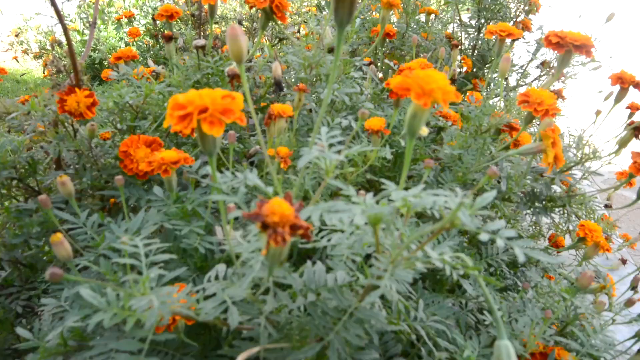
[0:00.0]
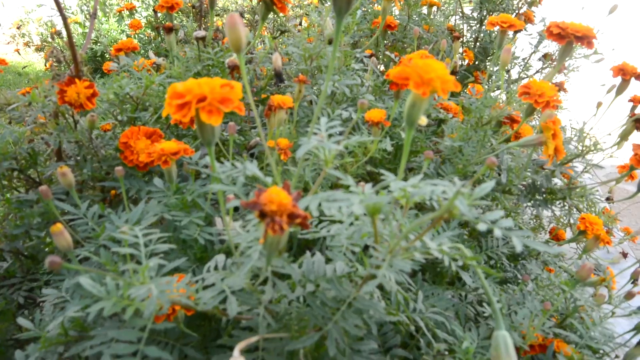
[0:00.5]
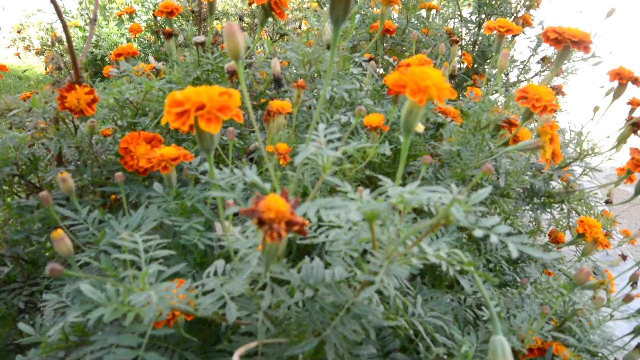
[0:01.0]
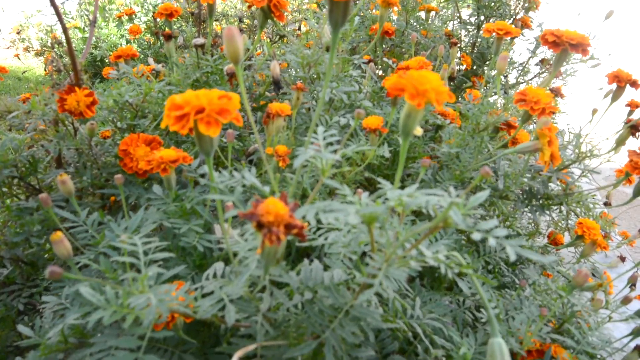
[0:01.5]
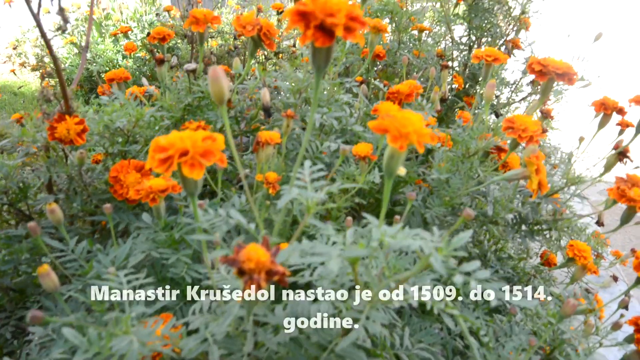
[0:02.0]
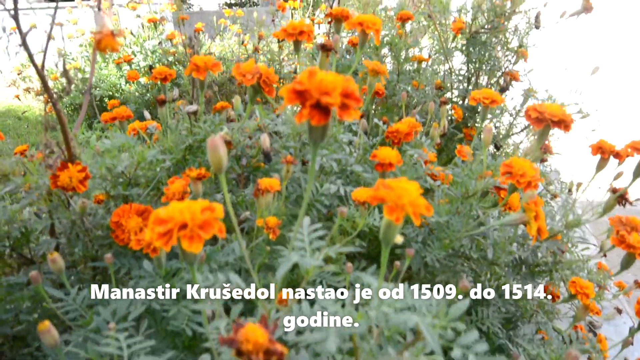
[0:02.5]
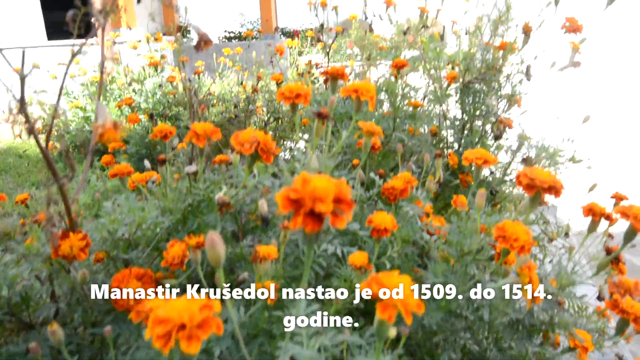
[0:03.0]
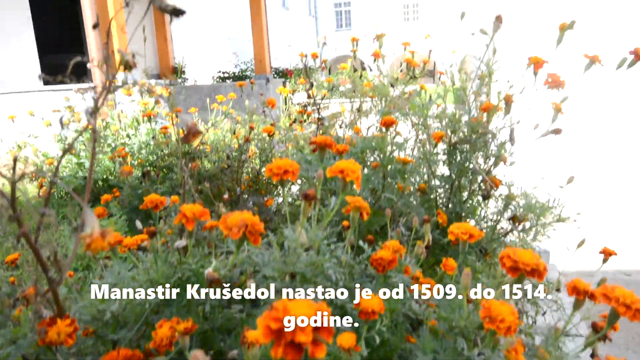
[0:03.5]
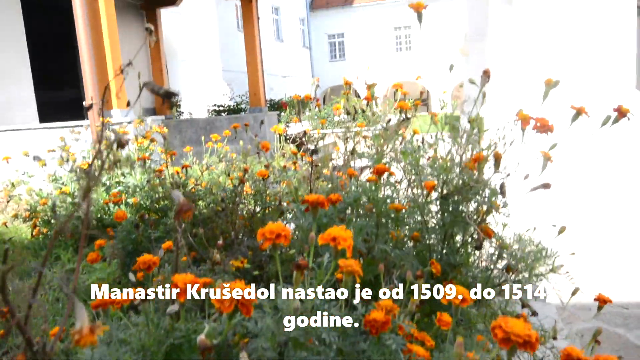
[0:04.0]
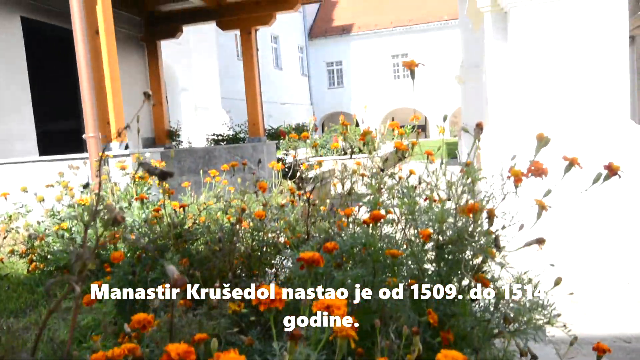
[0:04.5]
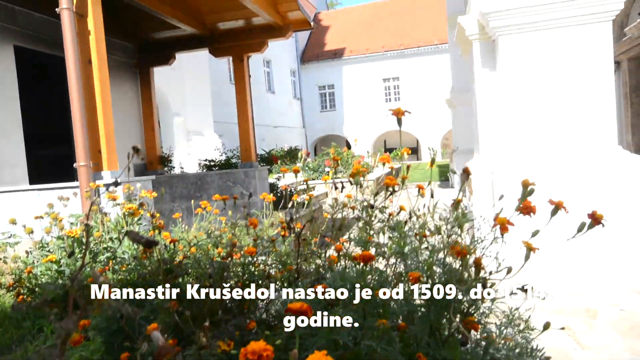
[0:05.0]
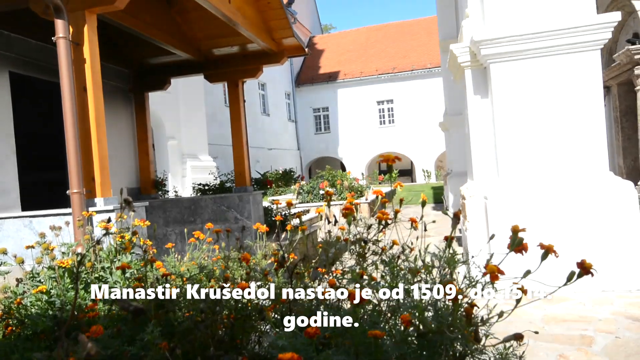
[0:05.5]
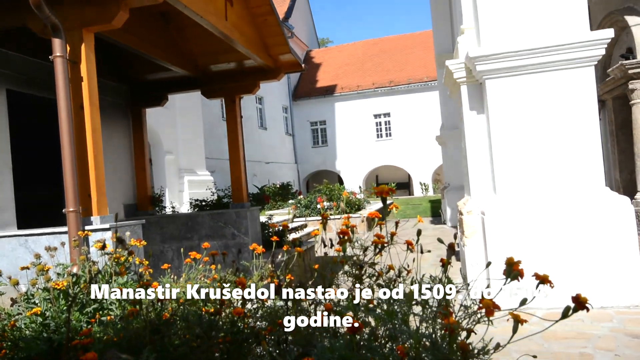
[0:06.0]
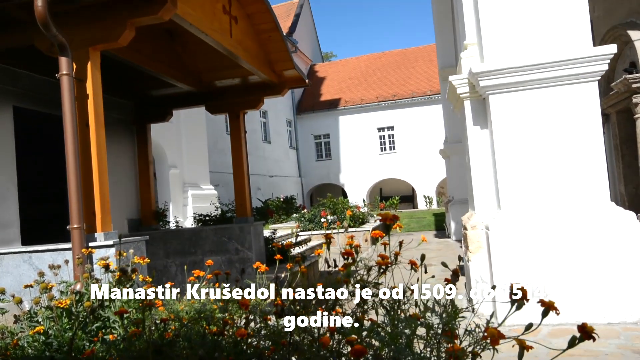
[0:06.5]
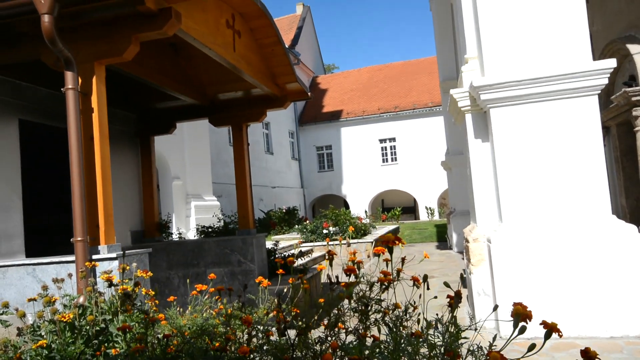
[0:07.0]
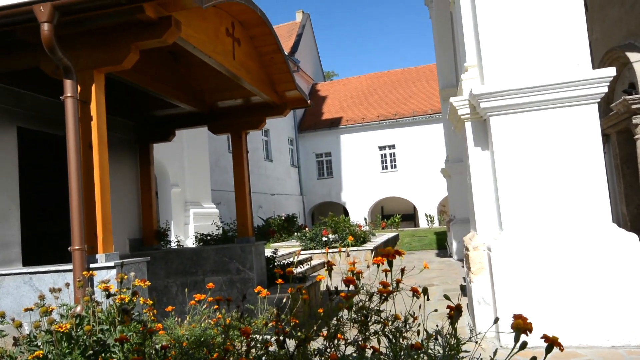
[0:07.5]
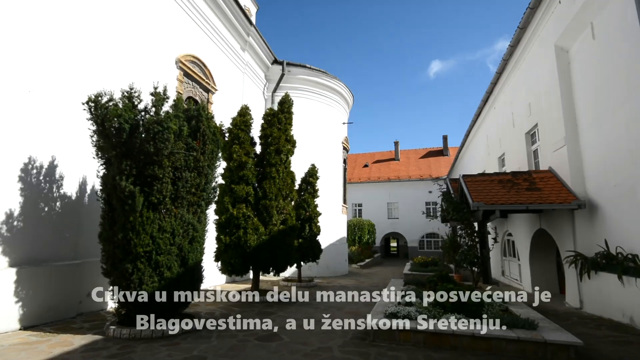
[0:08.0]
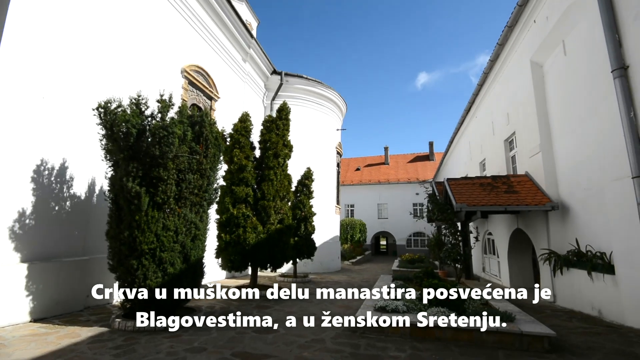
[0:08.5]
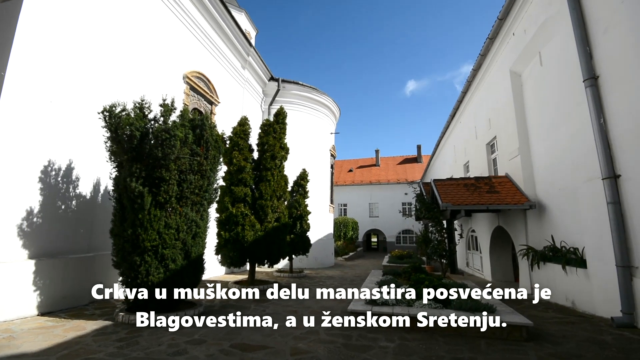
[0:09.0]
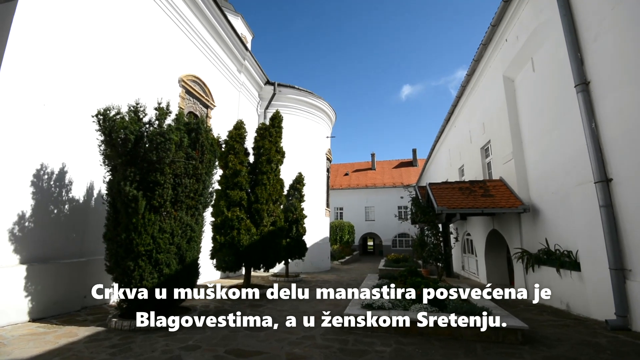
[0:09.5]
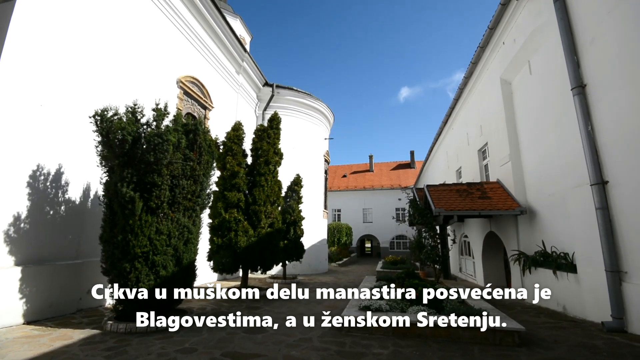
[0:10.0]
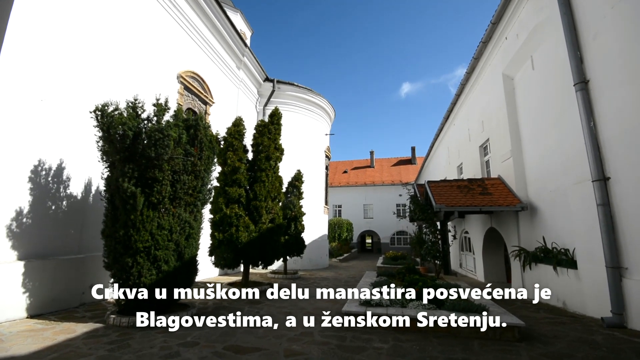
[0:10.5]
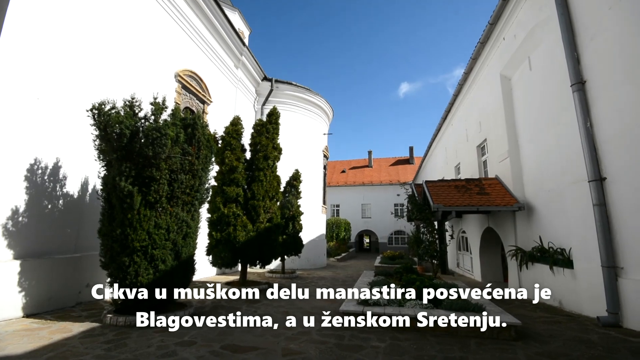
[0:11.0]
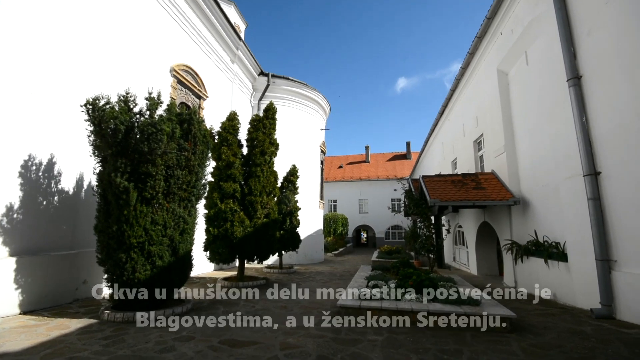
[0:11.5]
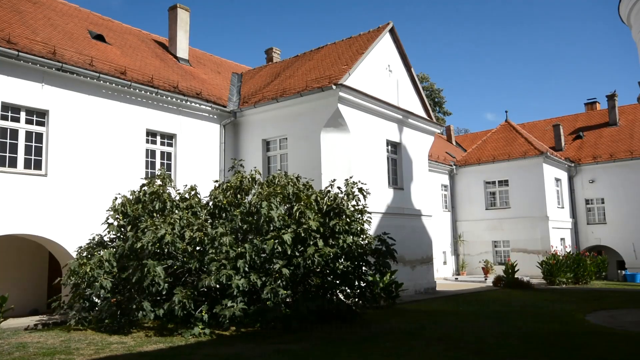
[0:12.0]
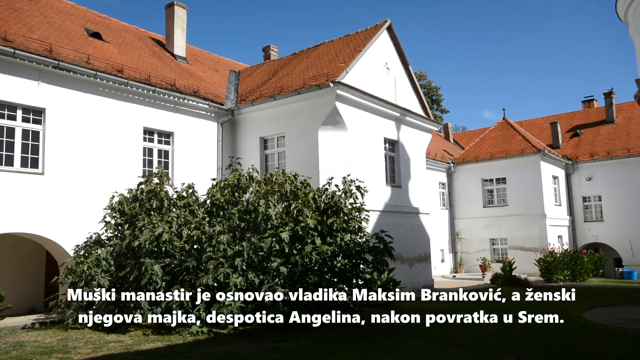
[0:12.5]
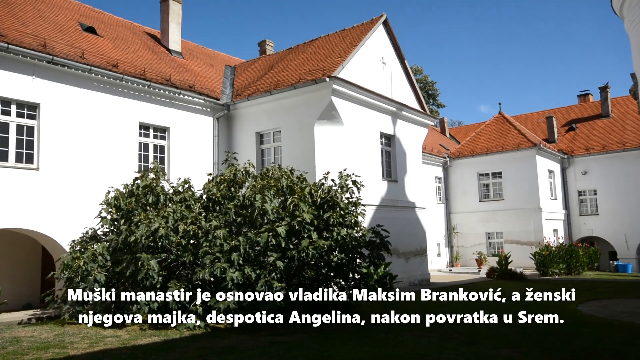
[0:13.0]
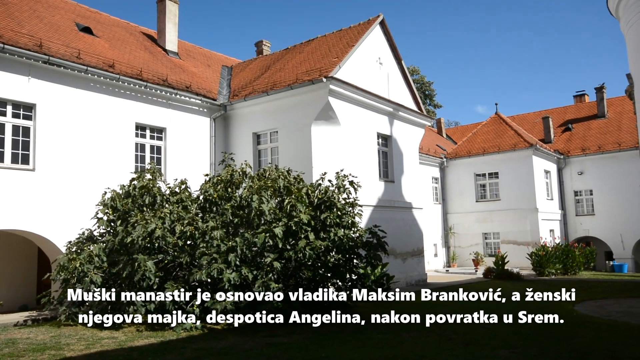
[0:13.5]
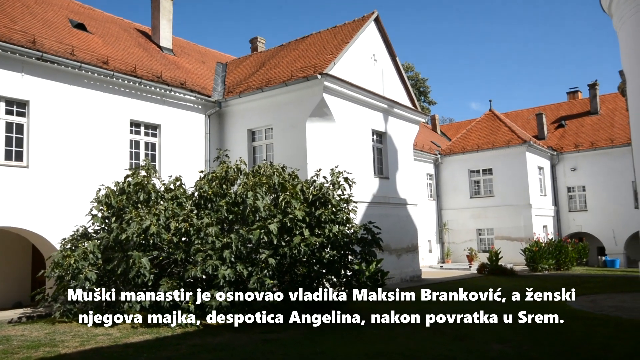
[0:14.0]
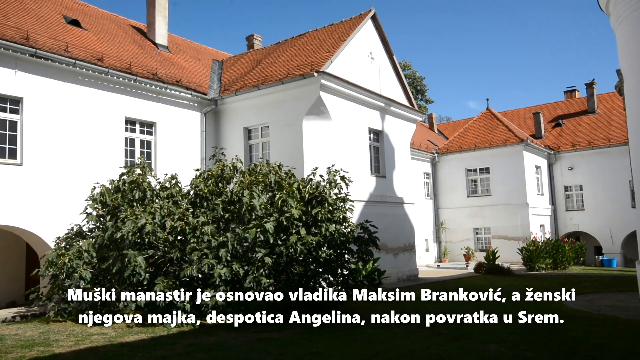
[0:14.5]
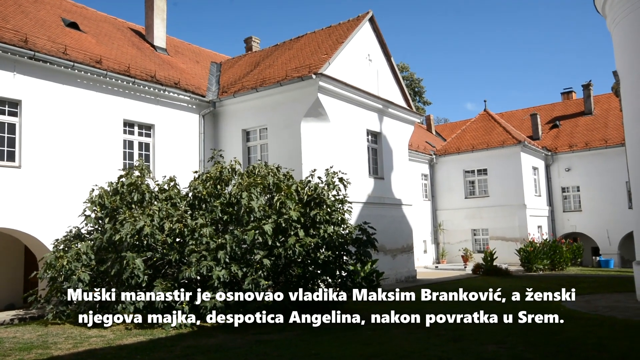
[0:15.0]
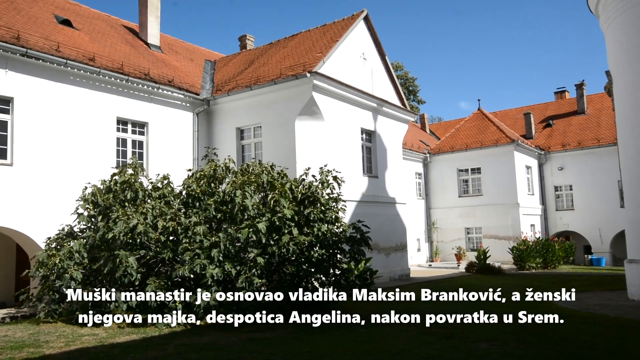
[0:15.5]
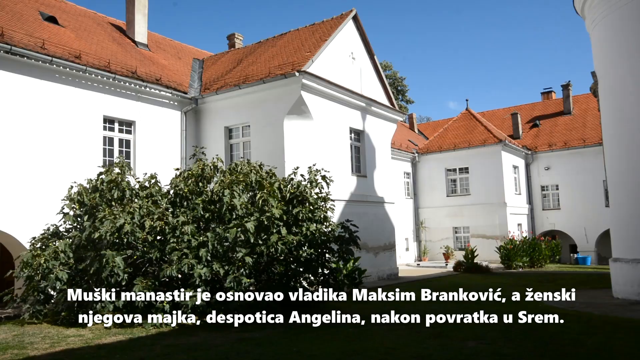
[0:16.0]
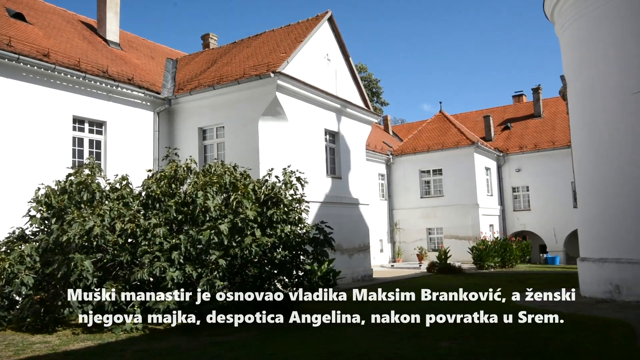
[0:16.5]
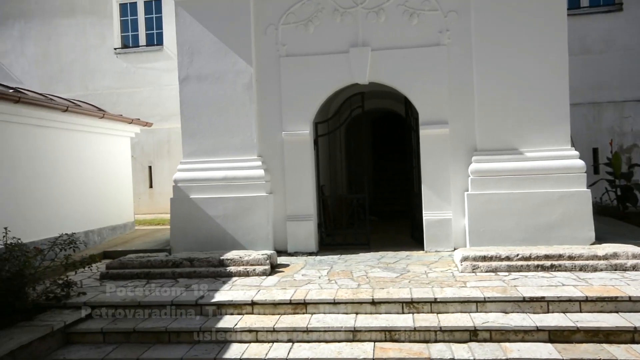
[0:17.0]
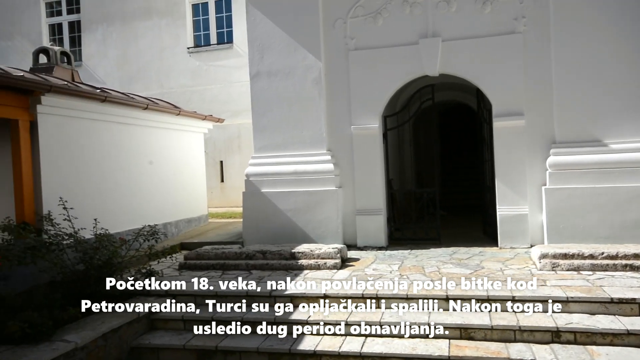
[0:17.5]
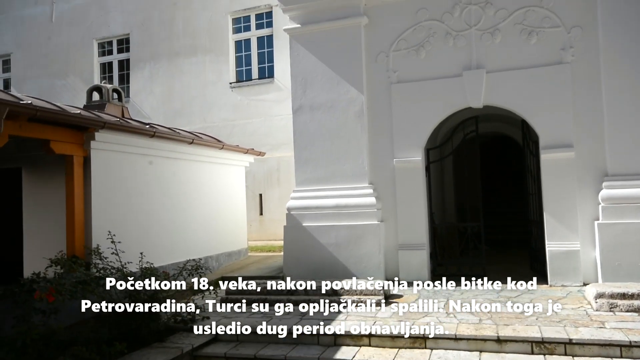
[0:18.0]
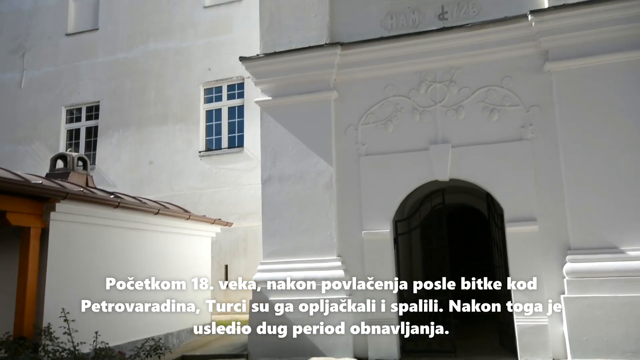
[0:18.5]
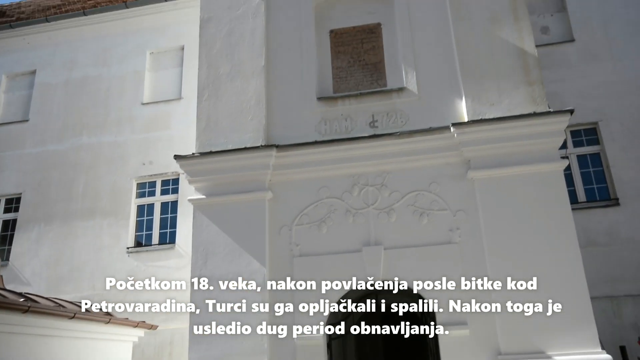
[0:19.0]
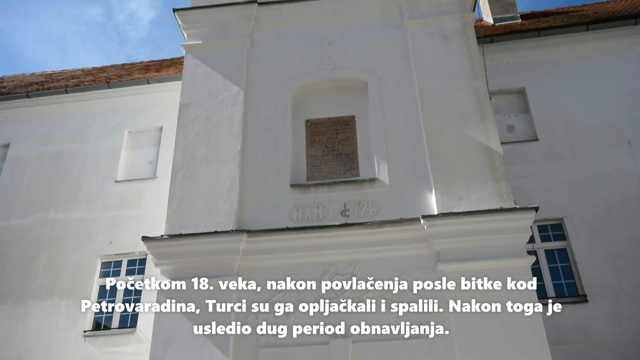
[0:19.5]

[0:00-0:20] The scene opens on yellow flowers on a bush that someone is filming, with white words in a language other than English written at the bottom. The view moves up to a white building with brown roofs. More words appear as white buildings with brown roofs are shown with bushes and plants; bushes and trees are on the left, a plant is on a white wall on the right, and there are trees by an entrance. The scene then shows taller white buildings with brown, triangular-shaped roofs and windows, with trees to the left and bushes to the right next to the buildings, along with a grassy area. Next comes another white building, where one of the buildings has an opening that is black, or looks black, and dark, through which the inside can be seen. The view then goes up toward the top of this building and the bright blue sky.